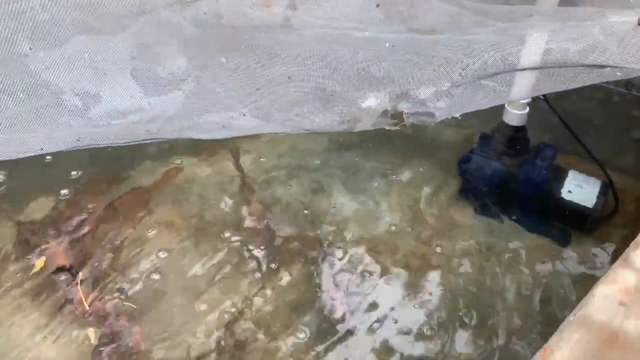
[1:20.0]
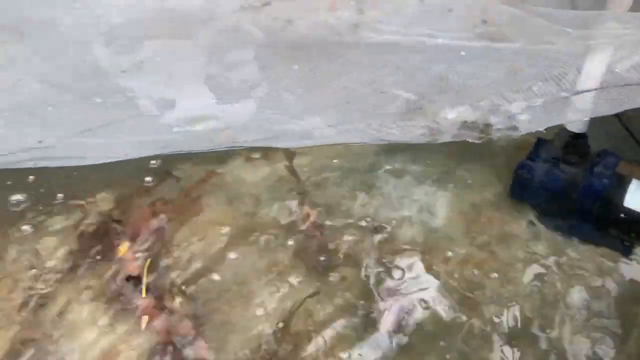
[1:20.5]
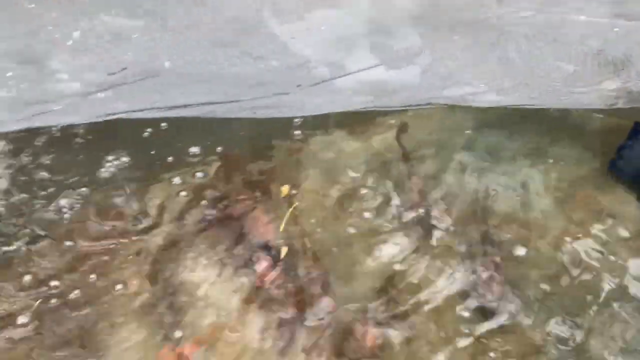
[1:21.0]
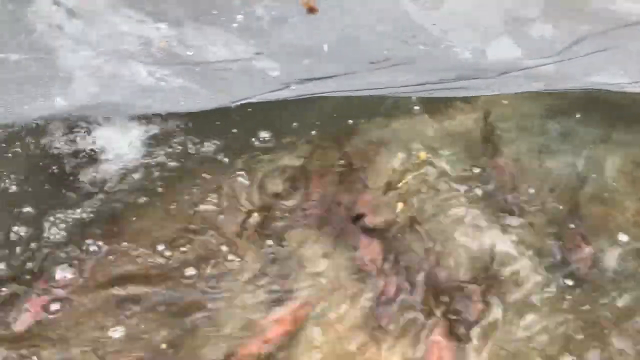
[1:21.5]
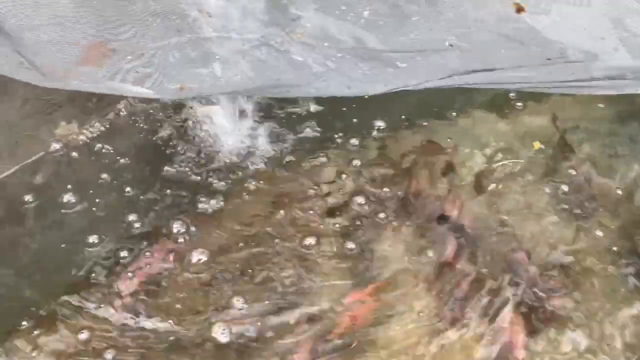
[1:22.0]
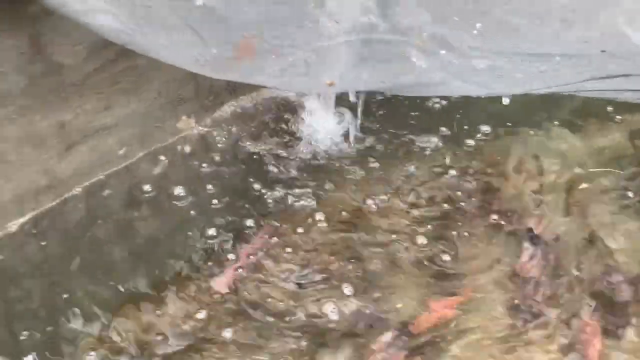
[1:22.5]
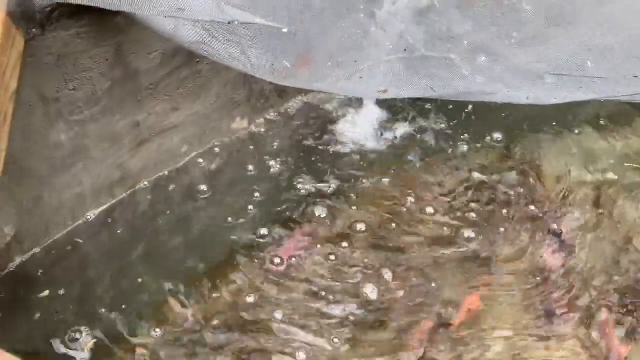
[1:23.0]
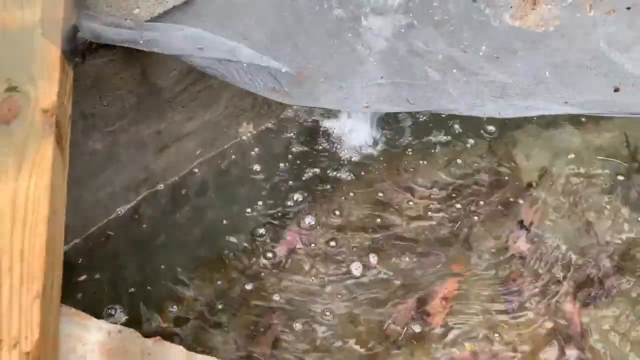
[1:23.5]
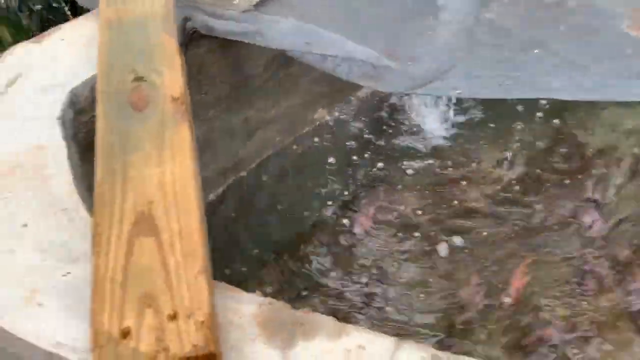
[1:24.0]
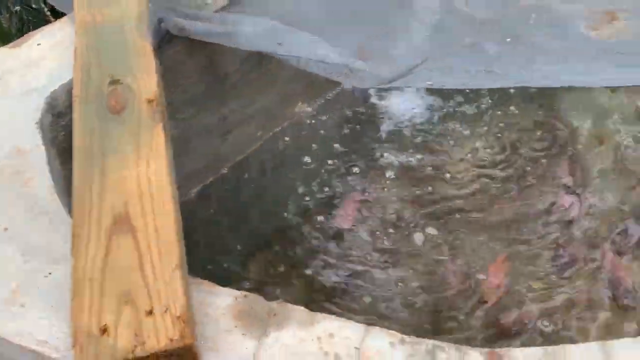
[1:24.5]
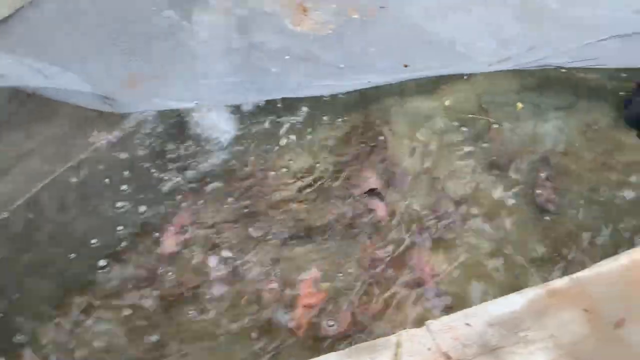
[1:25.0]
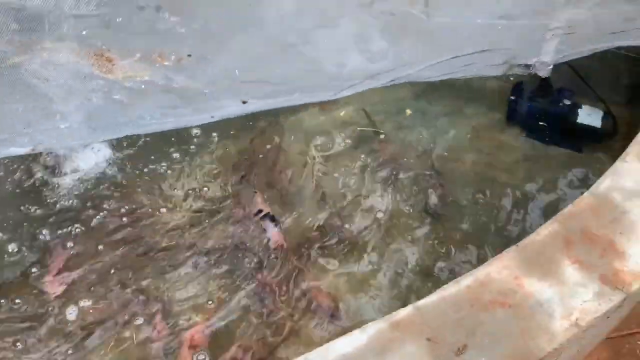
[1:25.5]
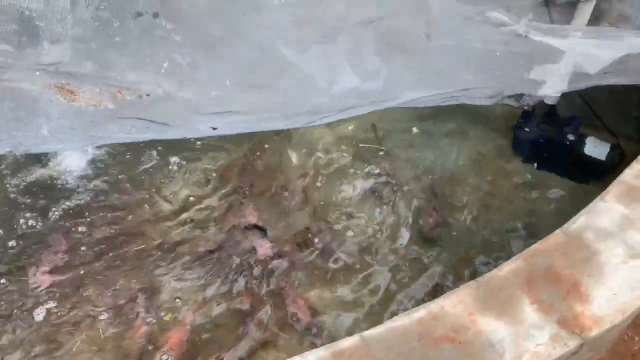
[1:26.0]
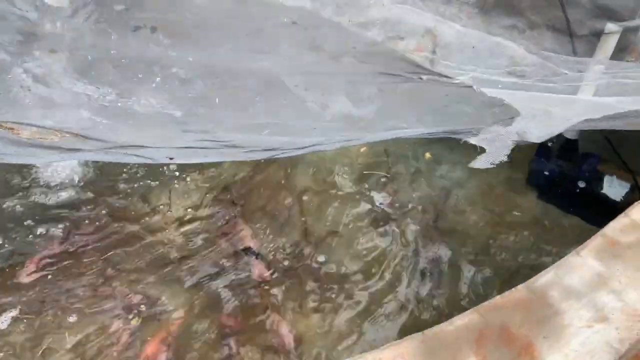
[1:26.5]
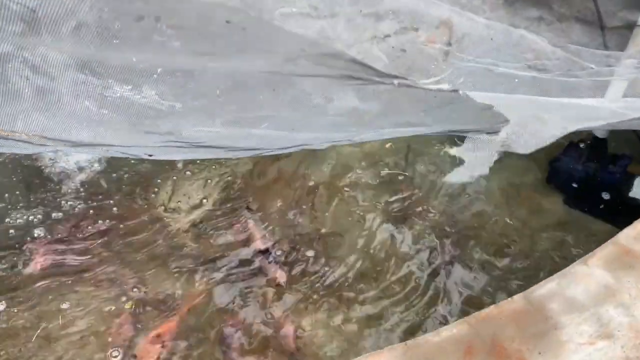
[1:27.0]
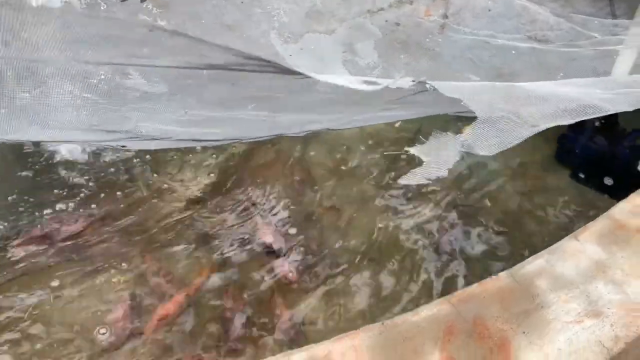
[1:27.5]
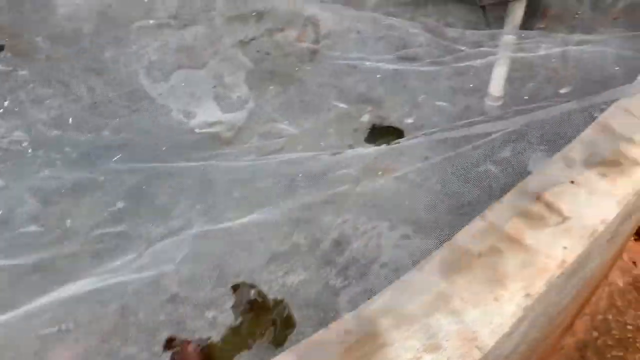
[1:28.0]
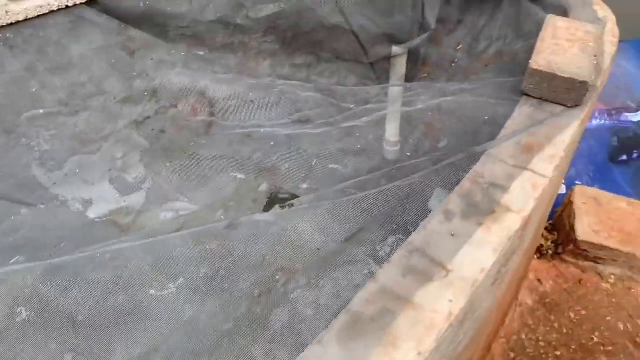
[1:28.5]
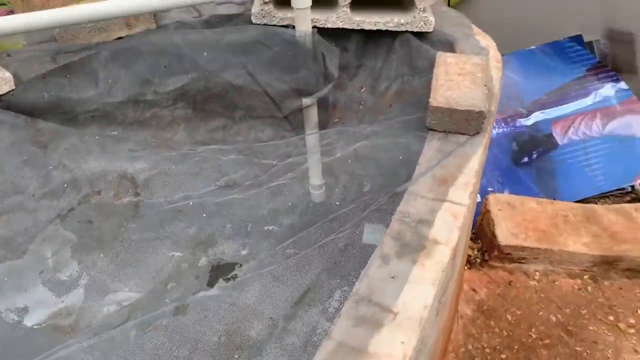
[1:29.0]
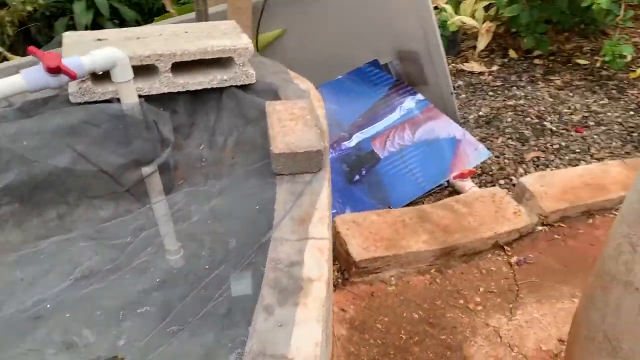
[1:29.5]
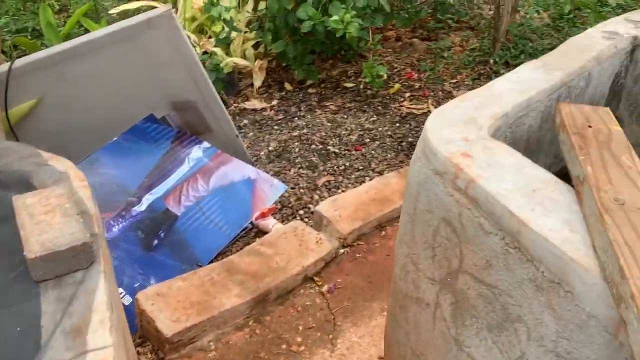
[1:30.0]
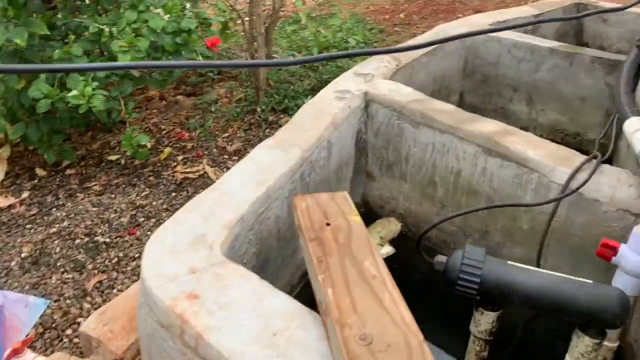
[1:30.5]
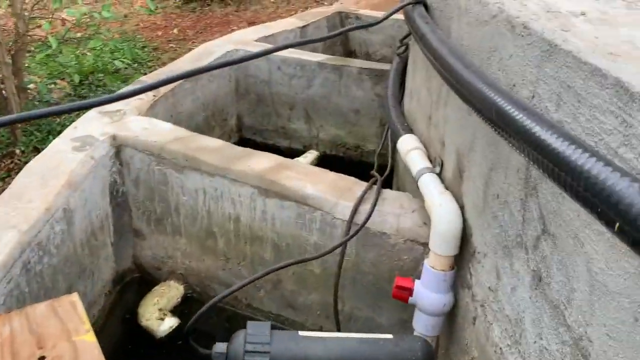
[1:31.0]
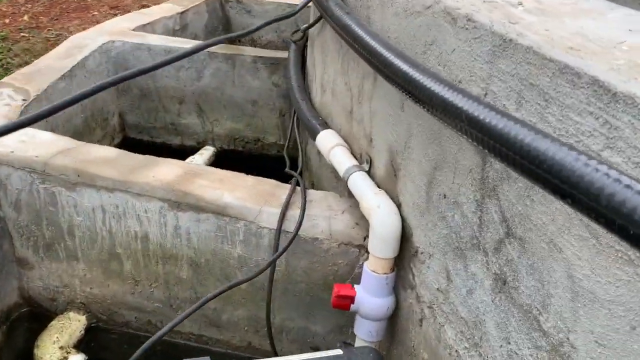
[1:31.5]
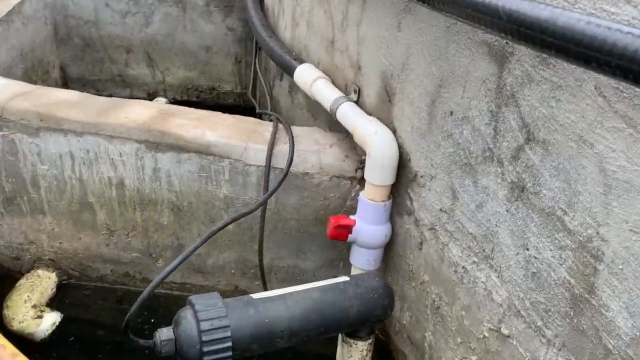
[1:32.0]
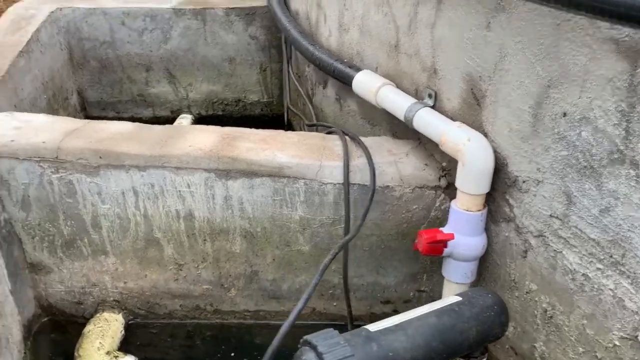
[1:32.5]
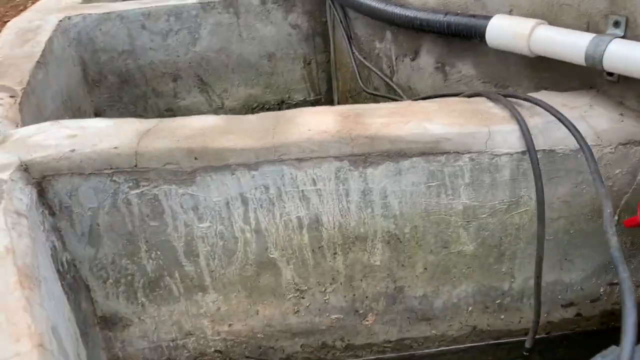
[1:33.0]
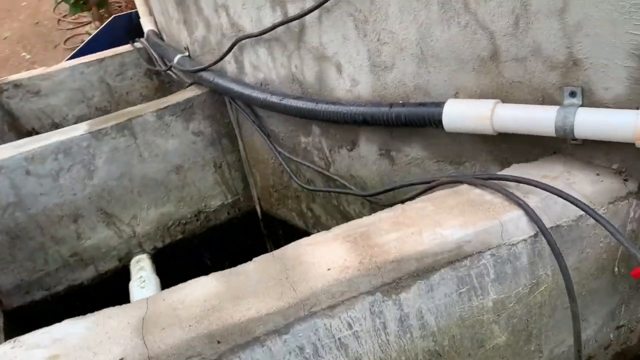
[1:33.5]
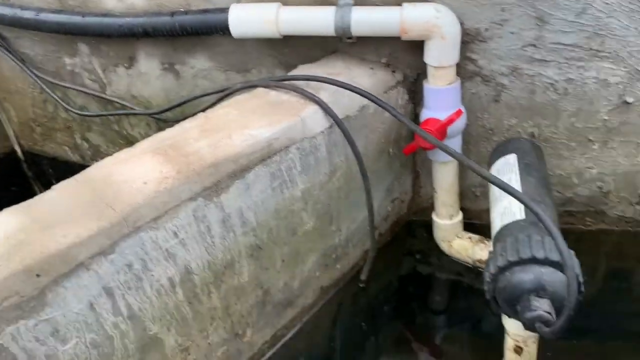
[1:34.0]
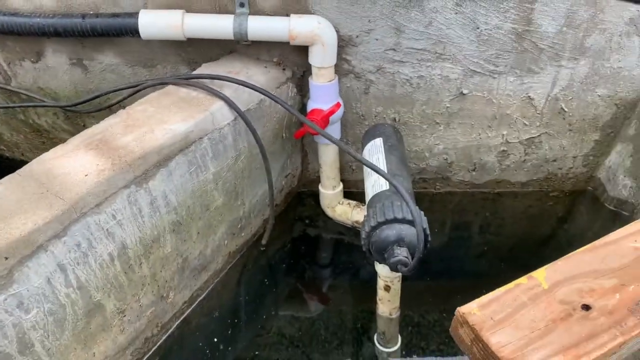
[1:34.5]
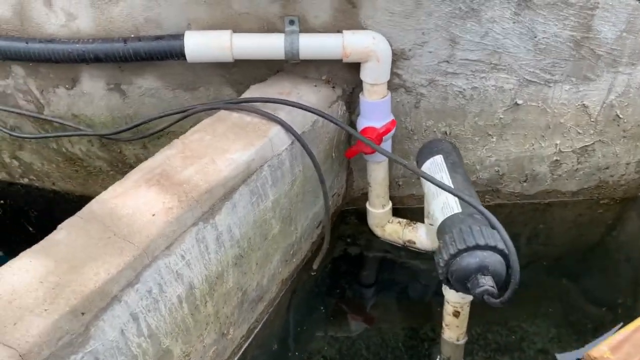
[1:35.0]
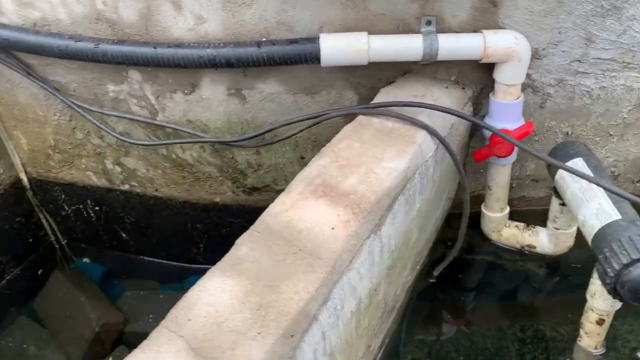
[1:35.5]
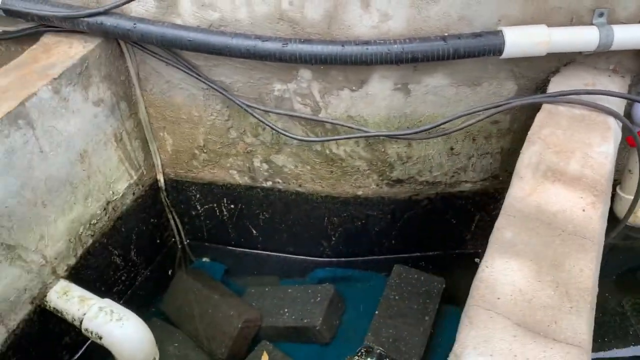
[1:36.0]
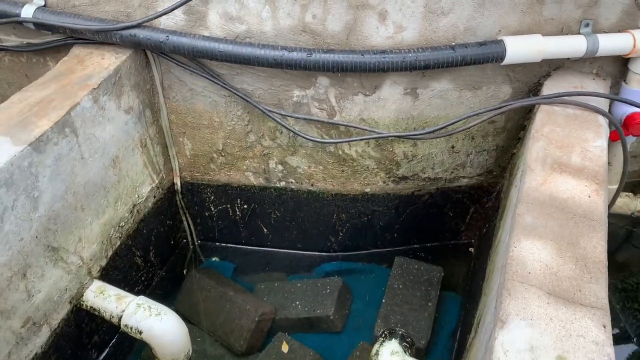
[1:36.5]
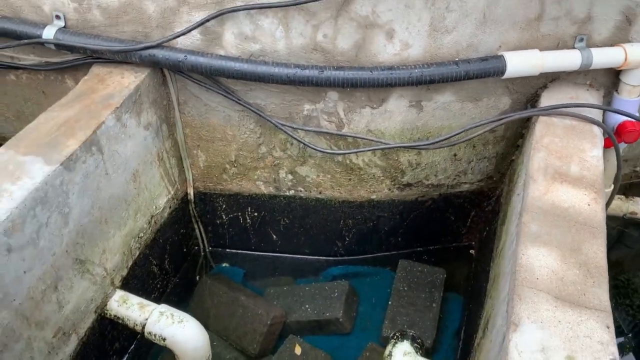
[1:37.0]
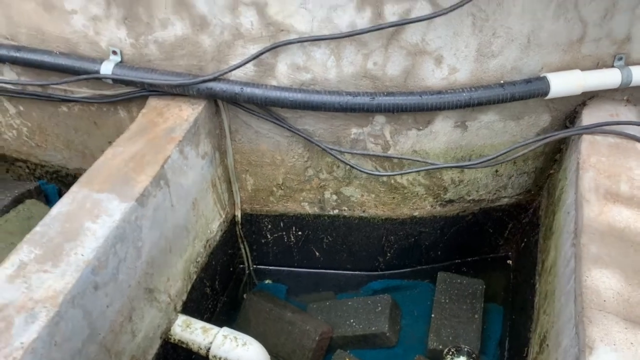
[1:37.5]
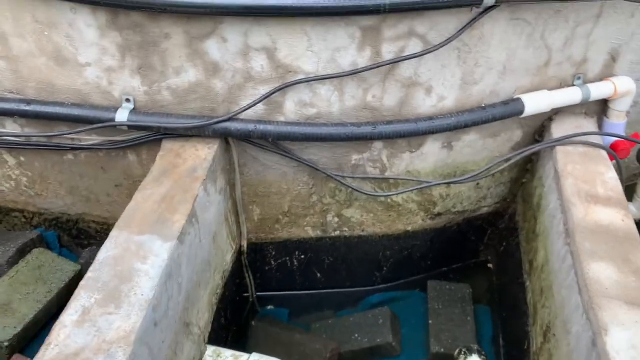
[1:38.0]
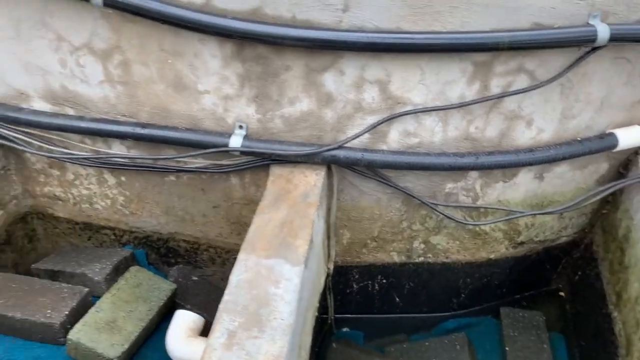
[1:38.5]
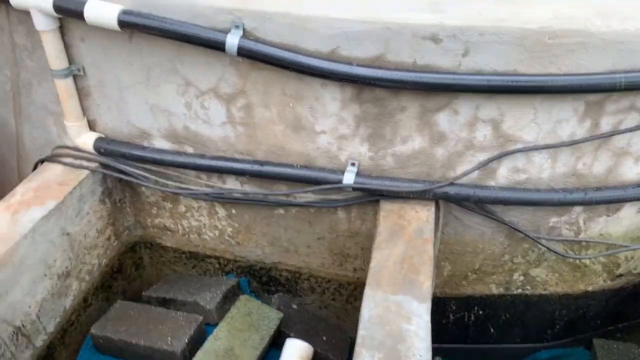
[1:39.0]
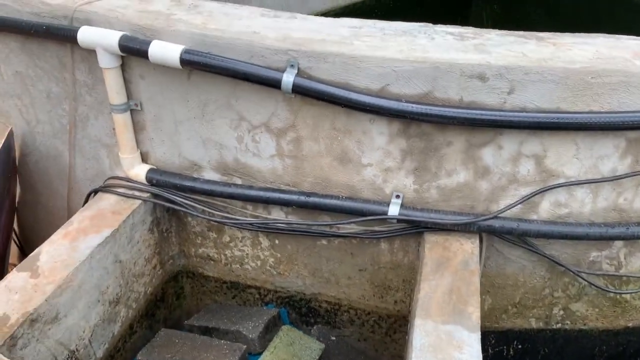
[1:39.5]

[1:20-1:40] A blue tank under the water has a white pipe attached to its top nozzle, and white, clear meshing is on top. Through the clear water, some orange fish float and swim around at the bottom. A gray cement wall is visible, with a brown piece of wood on the left side and gray cylinder blocks in the meshing. White piping and a black pipe are mounted to the side of the rounded cement tank. More gray and green cinder blocks are at the bottom. The black piping apparently carries water to the various cement tanks, and the blue motor apparently pumps the water from one location to the next.